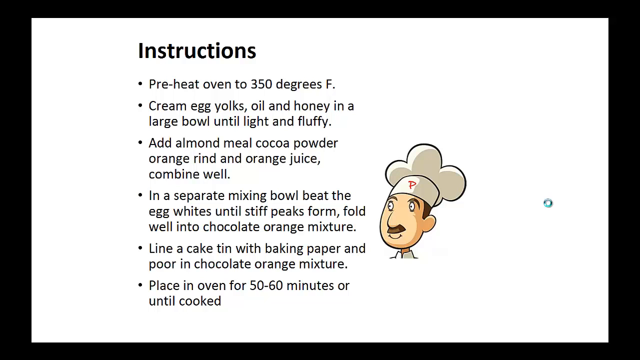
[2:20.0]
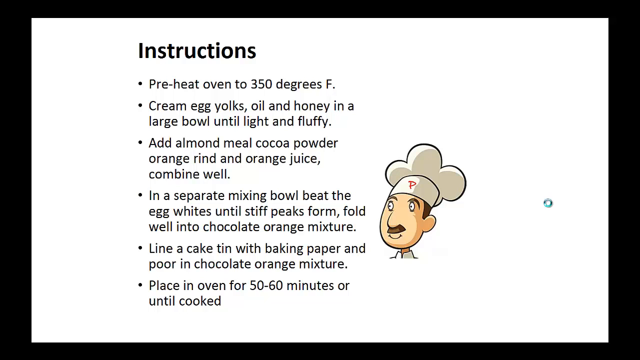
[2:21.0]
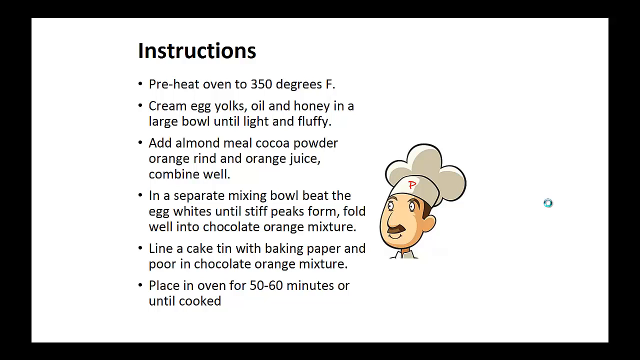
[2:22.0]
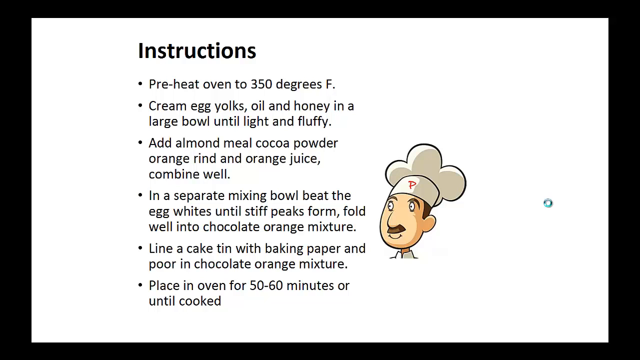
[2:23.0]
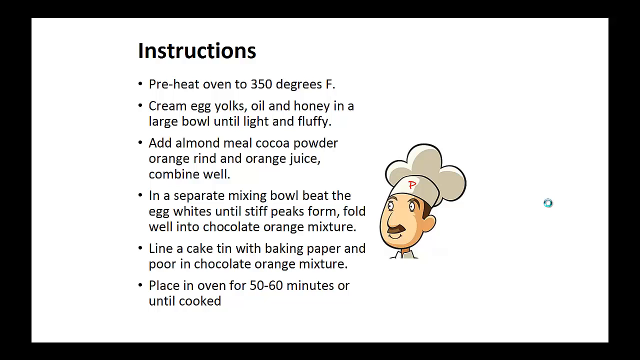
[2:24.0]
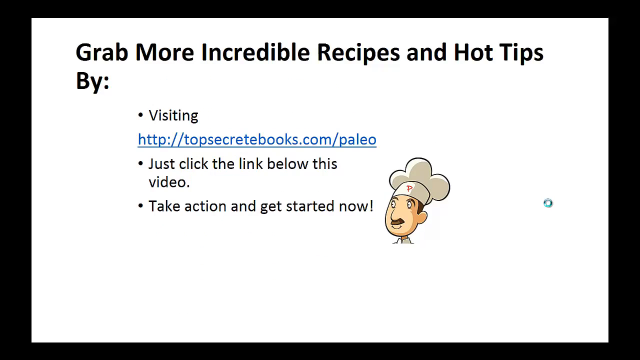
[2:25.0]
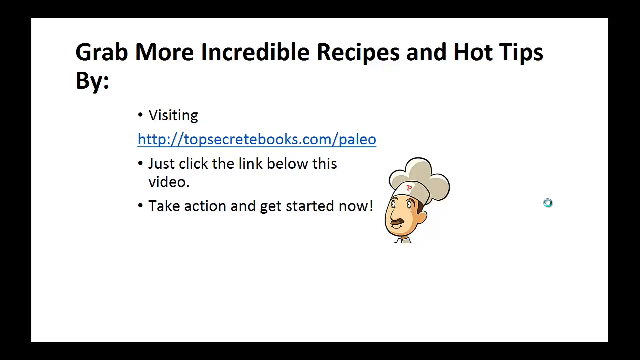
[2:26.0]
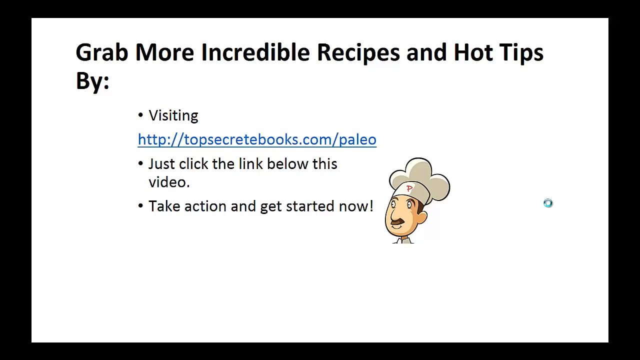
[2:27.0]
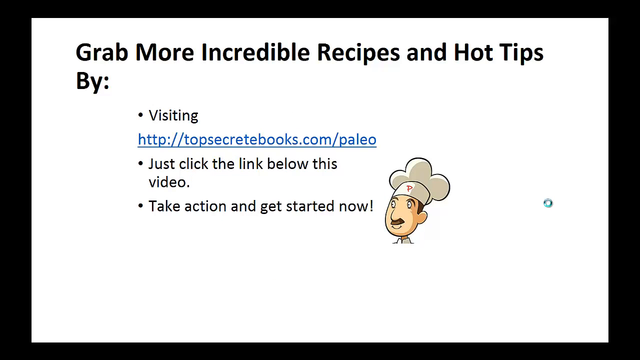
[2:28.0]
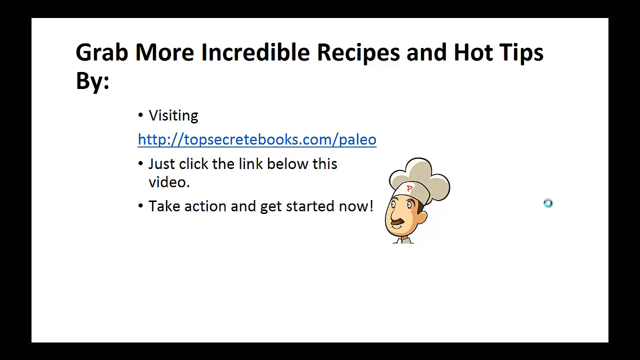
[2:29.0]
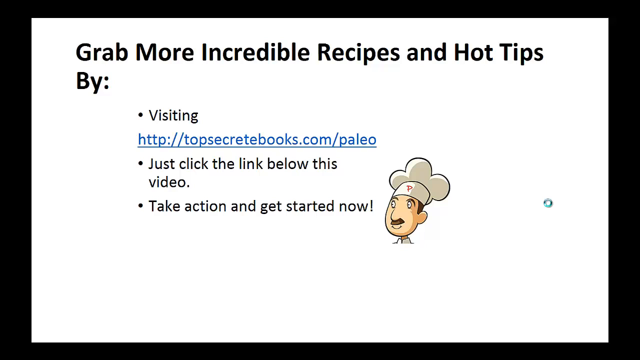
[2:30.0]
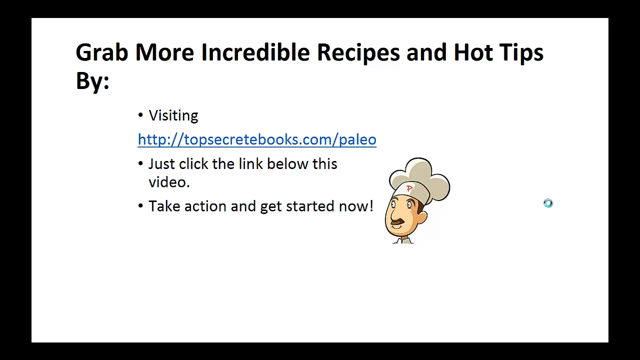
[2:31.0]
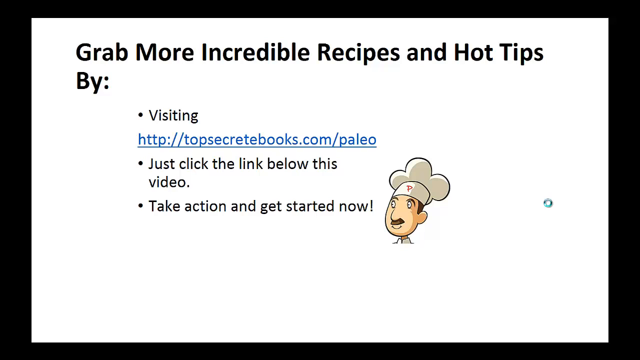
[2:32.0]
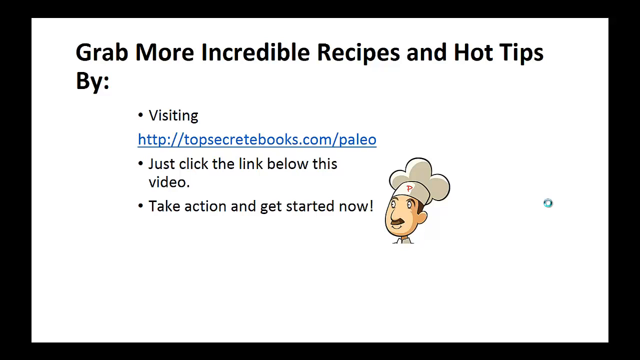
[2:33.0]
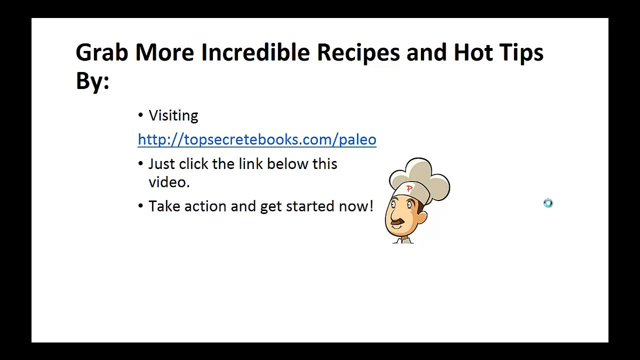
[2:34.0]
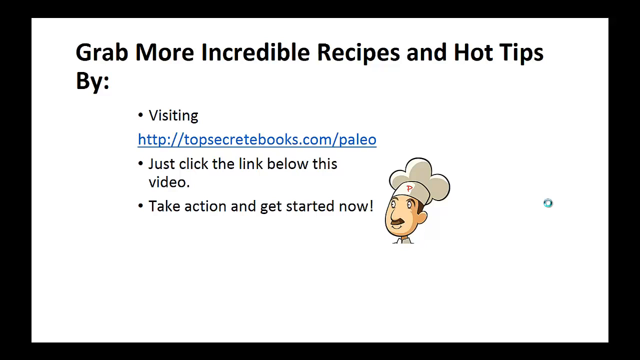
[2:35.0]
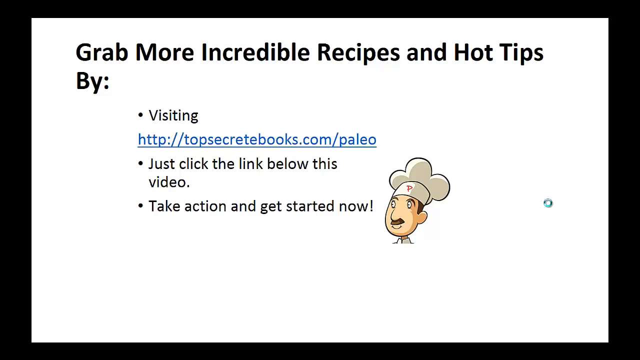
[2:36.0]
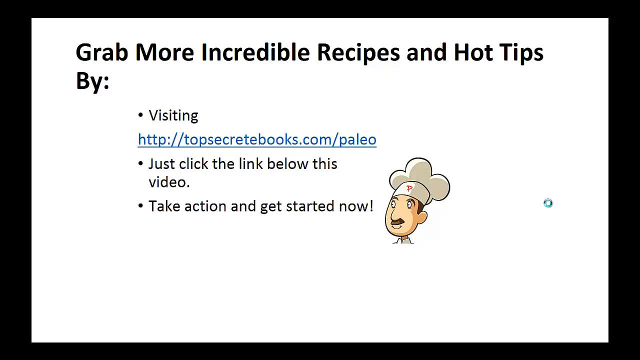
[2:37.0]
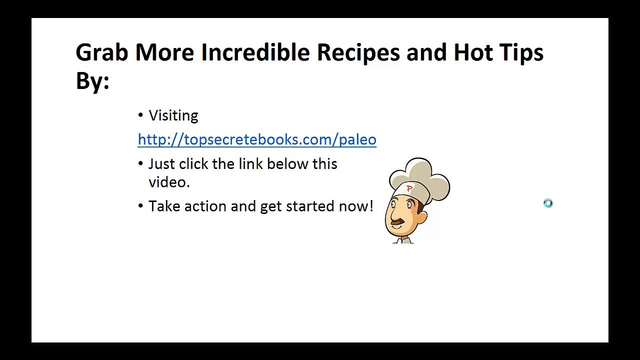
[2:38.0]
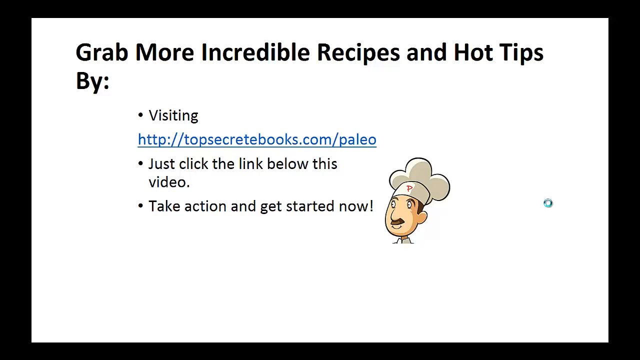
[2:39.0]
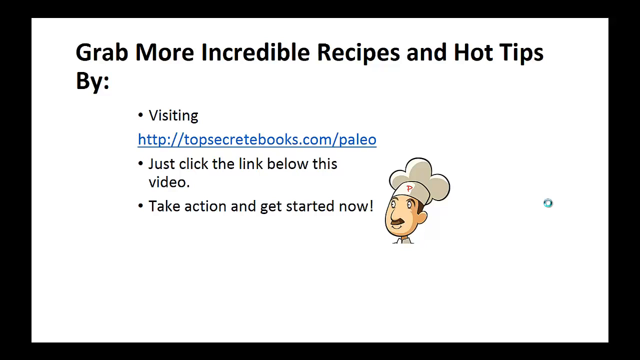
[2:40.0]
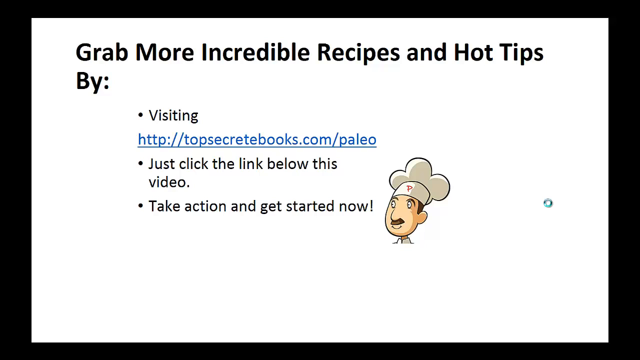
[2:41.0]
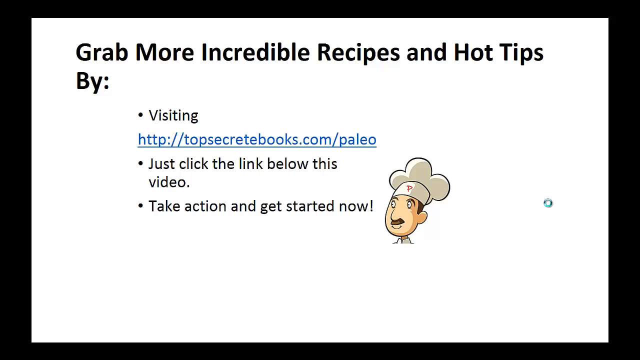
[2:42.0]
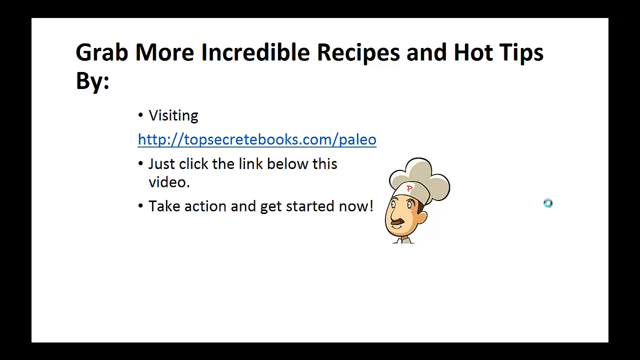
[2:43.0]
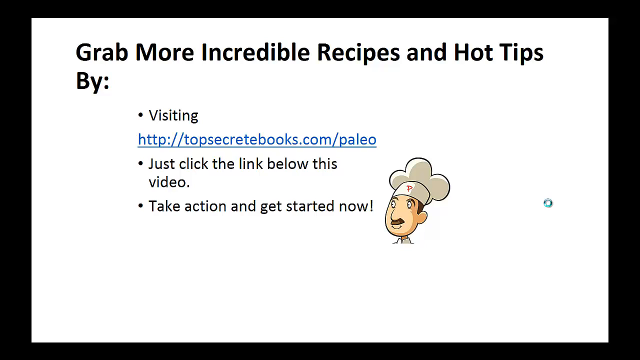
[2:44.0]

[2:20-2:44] The instructions continue with "place in oven for 50 to 60 minutes or until cooked". Then a new frame appears, again with an entirely white background and a black border on all four sides. At the top of the page is the text "grab more incredible recipes and hot tips", followed on a new line by "by:". Further down and inset from the left is a bullet point reading "visiting", and on the line below, in blue underlined font that looks like a link, is "http://topsecretebooks.com/paleo". Below that is another bullet point, "just click the link below this video", and below that, "take action and get started now". The image of the chef is still on the right of the text, and the stray circle still appears, isolated, on the right of the screen.